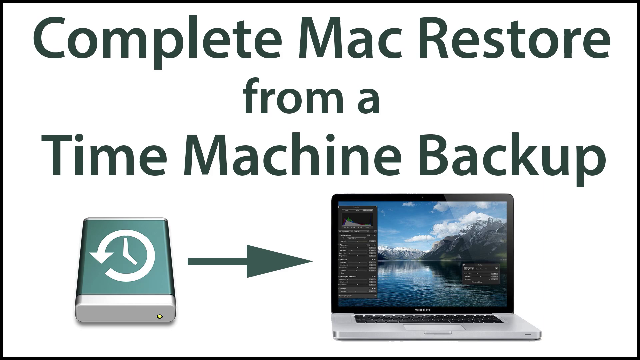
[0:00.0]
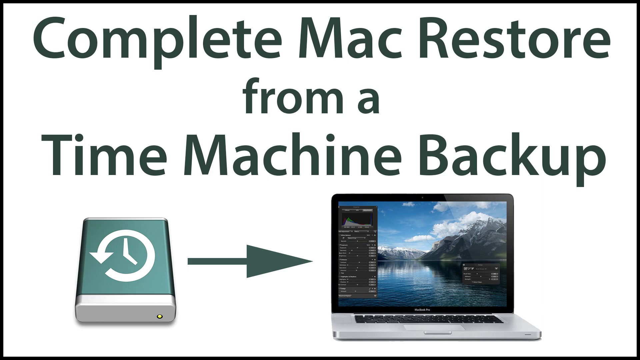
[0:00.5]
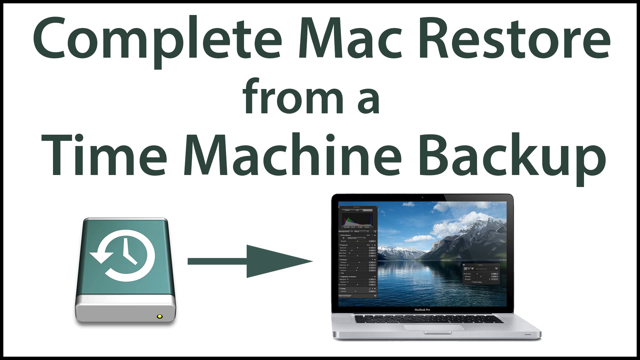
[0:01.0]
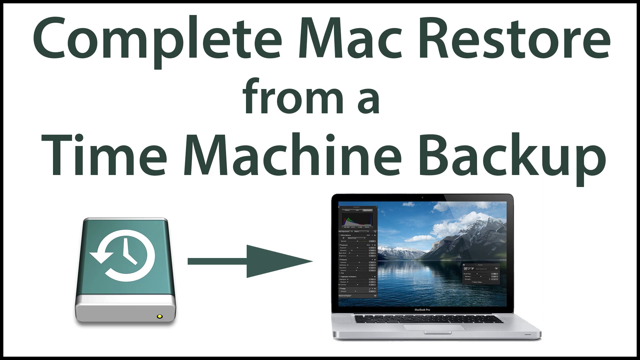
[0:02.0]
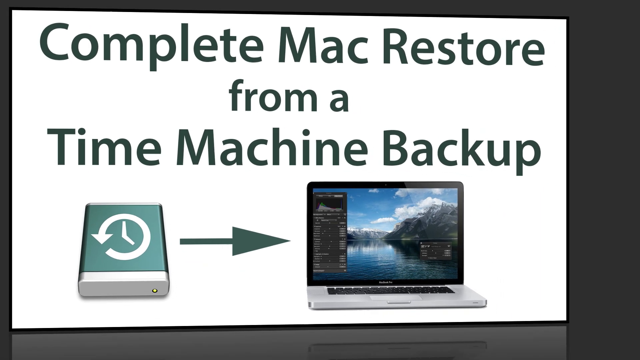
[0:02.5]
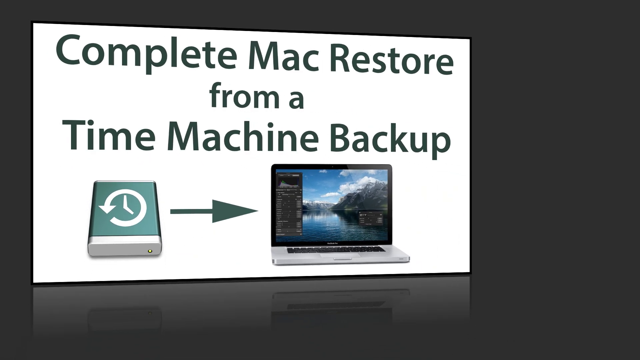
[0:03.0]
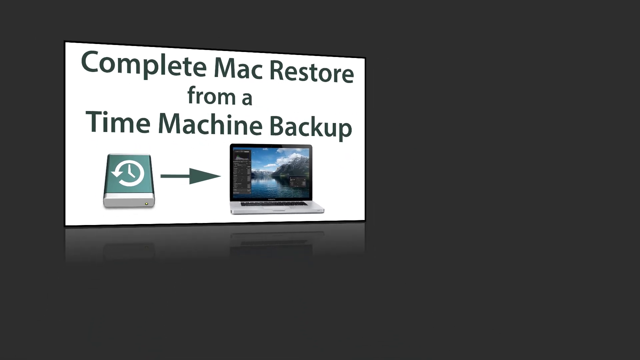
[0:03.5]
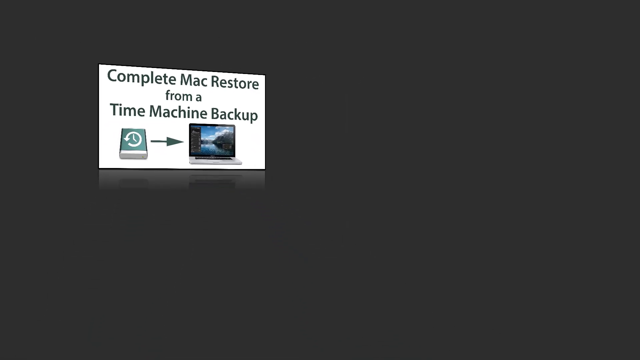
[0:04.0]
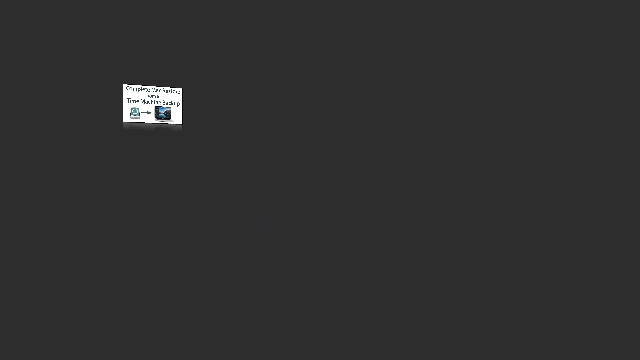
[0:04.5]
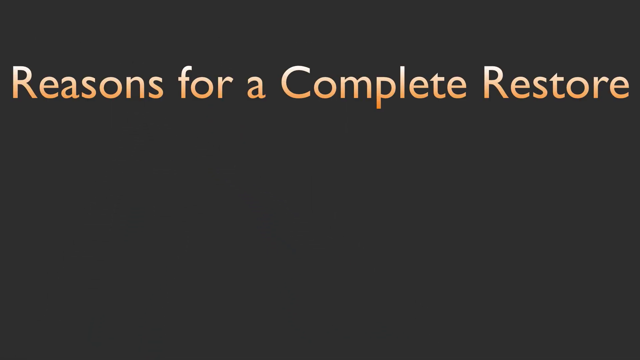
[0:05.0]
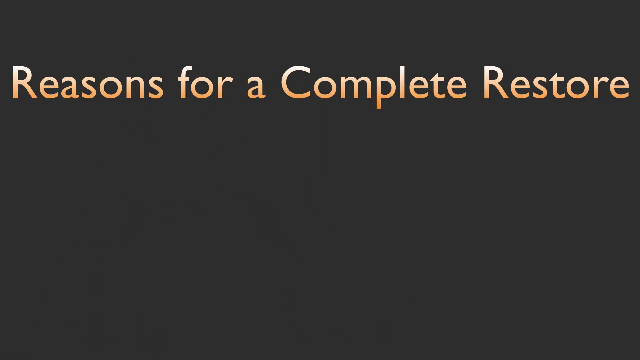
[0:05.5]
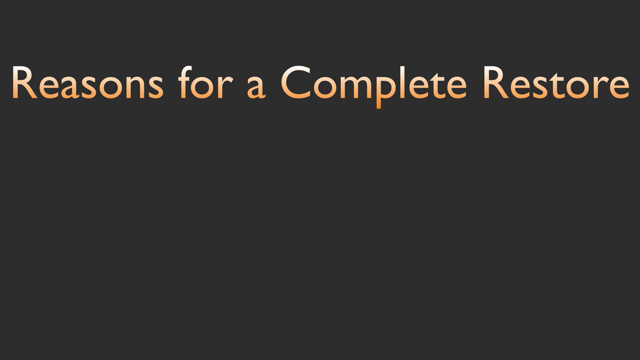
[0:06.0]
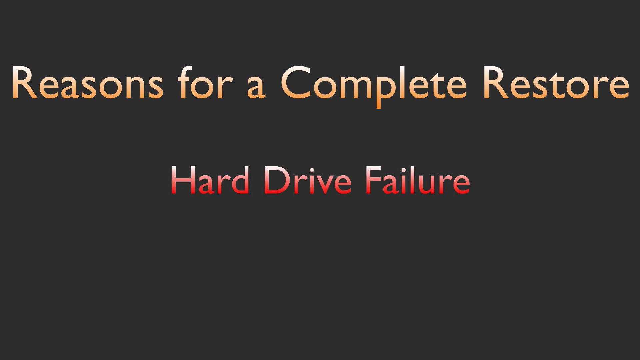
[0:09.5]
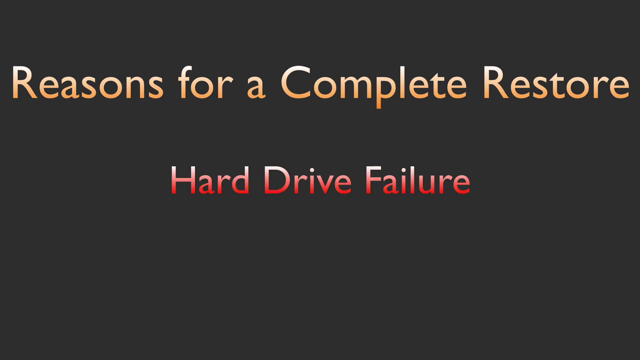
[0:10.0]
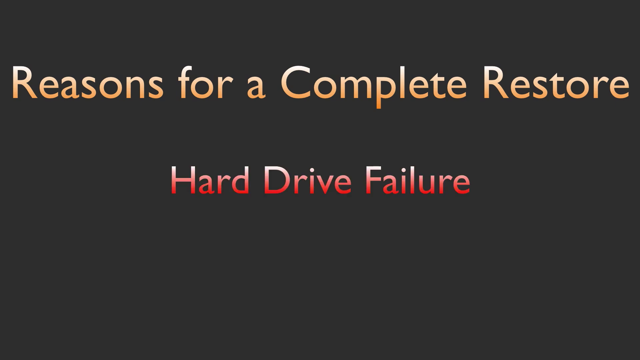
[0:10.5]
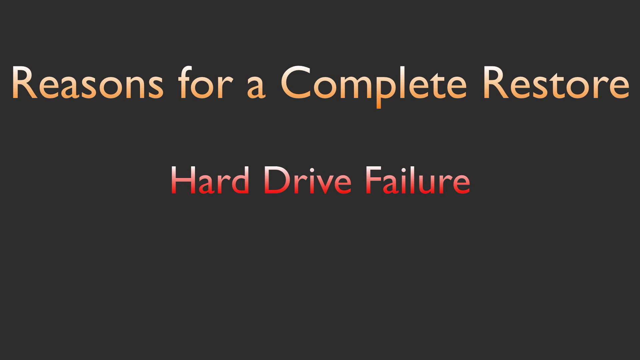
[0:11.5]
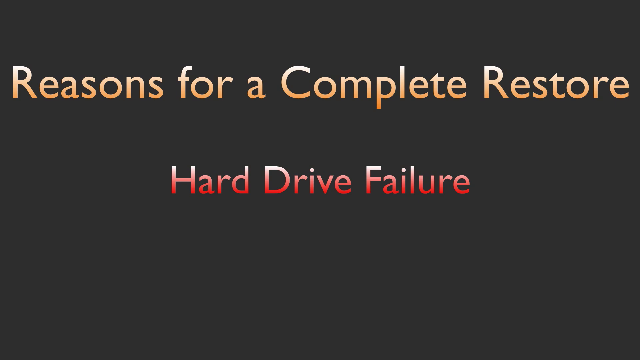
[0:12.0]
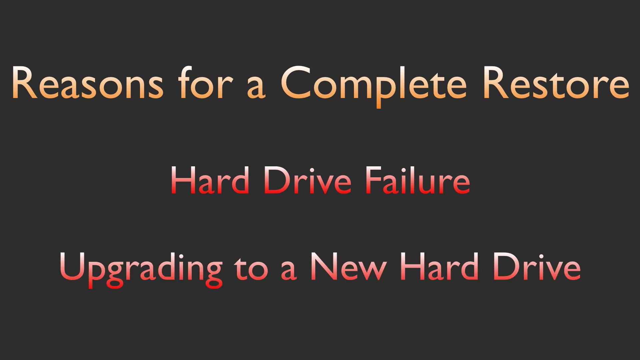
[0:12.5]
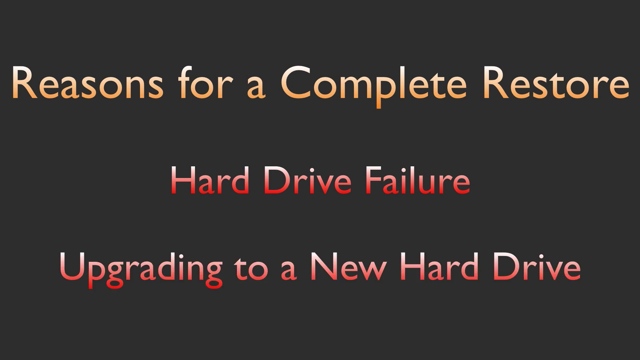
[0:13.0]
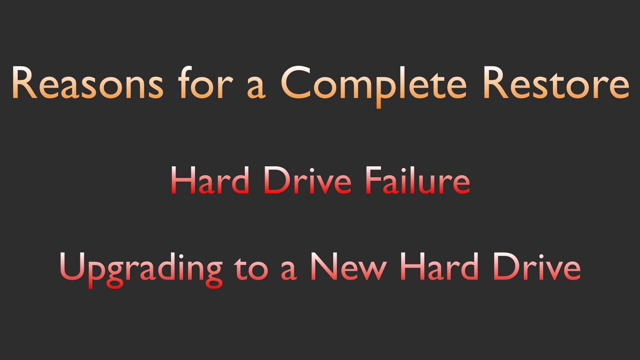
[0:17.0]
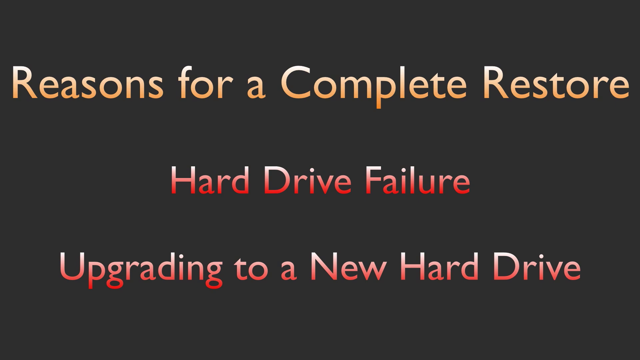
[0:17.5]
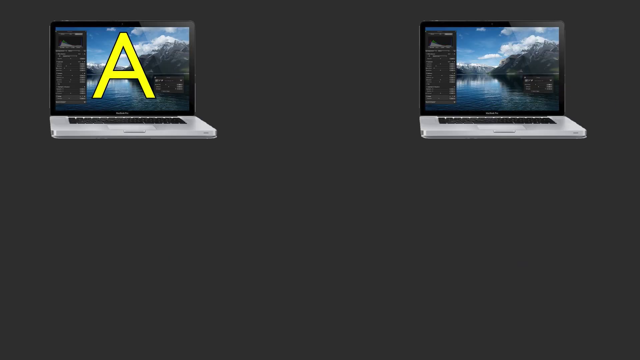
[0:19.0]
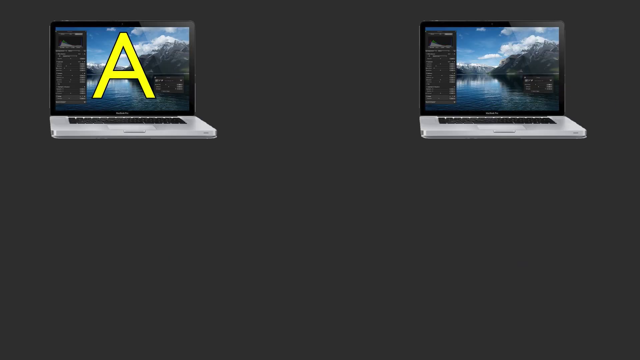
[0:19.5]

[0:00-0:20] The video opens with the title "Complete Mac Restore from a Time Machine Backup." There is a diagram of a circular arrow going counterclockwise with a clock inside it that looks like it shows 5 o'clock, and an arrow points to a TV screen or computer monitor. This opening page drifts away to a black screen that reads "reasons for a complete restore," listing "Hard Drive Failure" and "Upgrading to a New Hard Drive." The screen is not complicated: the background is black and the letters are red with white tops, except for the title, "Reason for Restore," which is orange with white at the top. The segment ends with two computer screens that look identical and show the same image, one with an "A" and one blank.